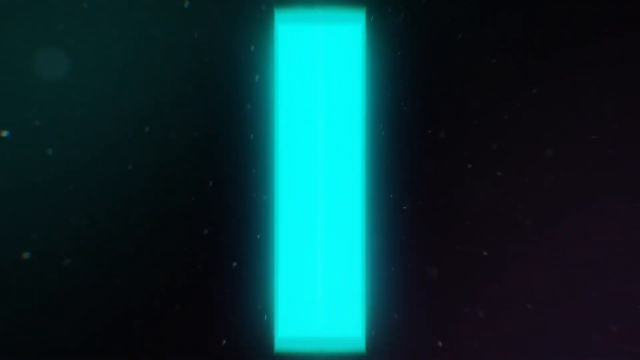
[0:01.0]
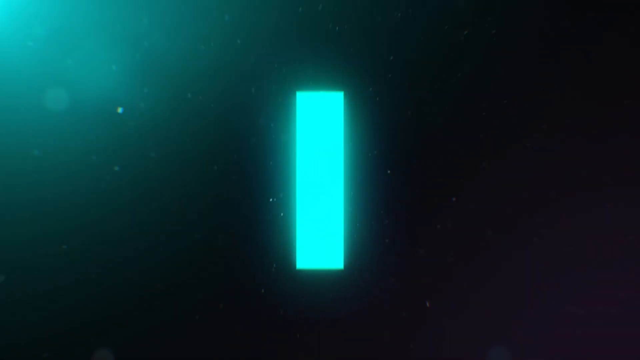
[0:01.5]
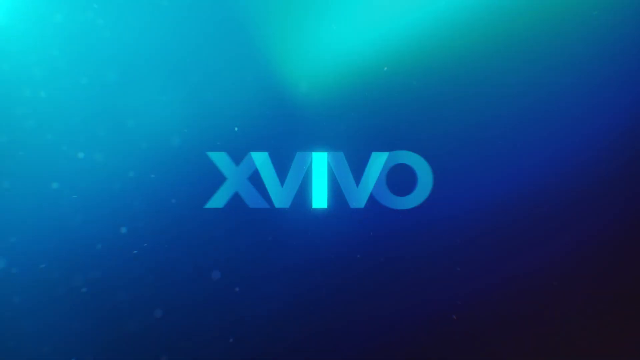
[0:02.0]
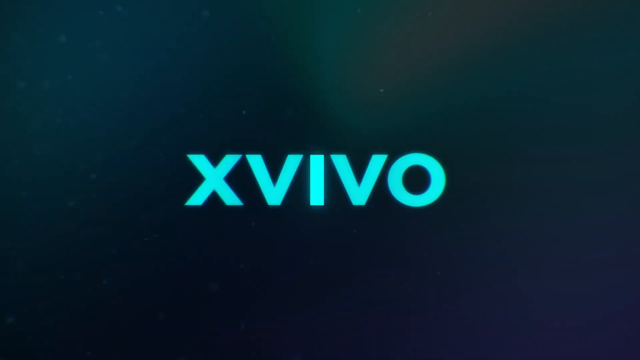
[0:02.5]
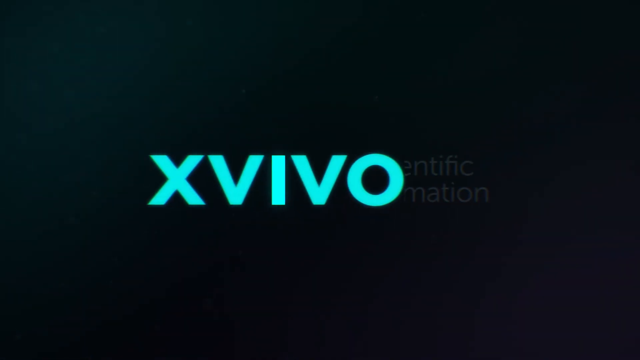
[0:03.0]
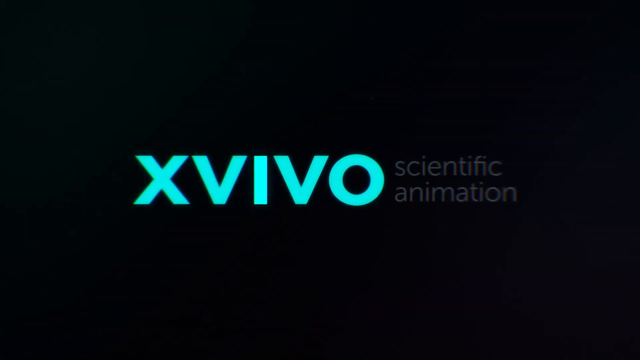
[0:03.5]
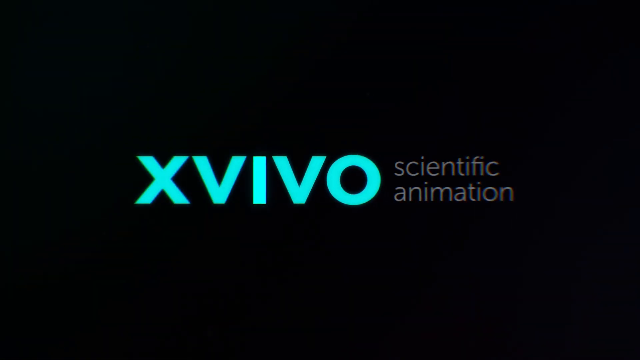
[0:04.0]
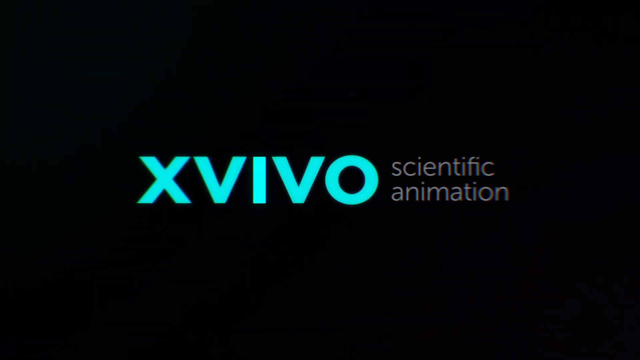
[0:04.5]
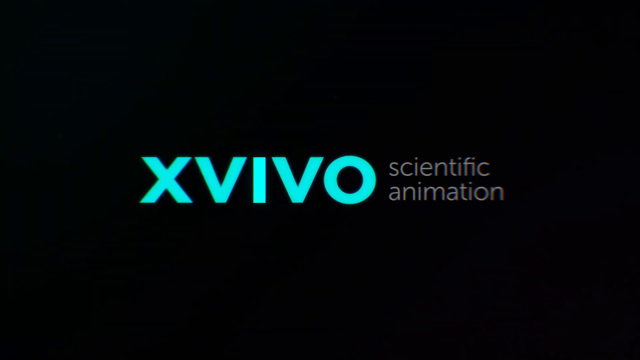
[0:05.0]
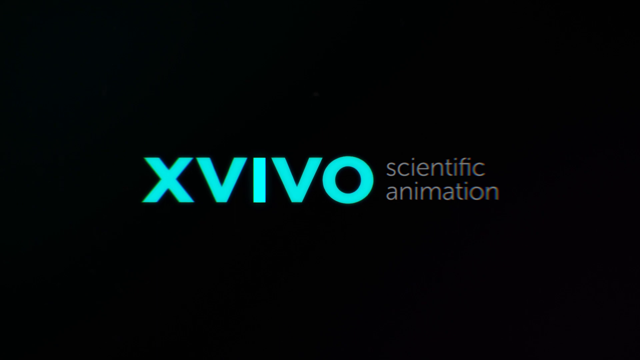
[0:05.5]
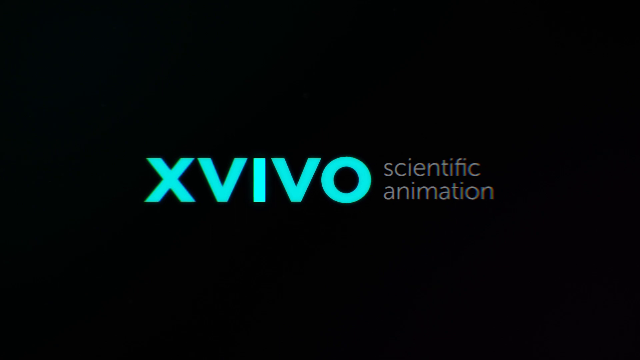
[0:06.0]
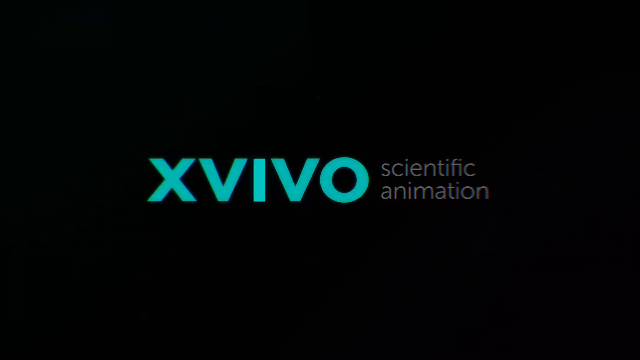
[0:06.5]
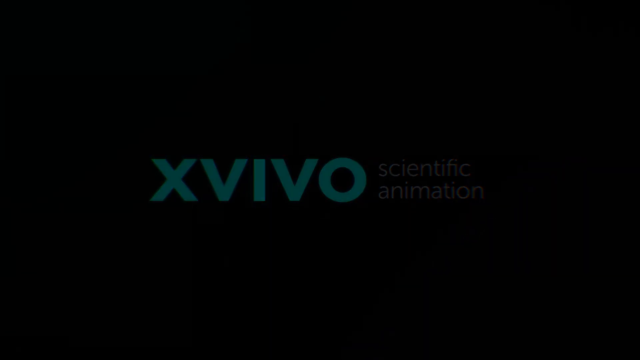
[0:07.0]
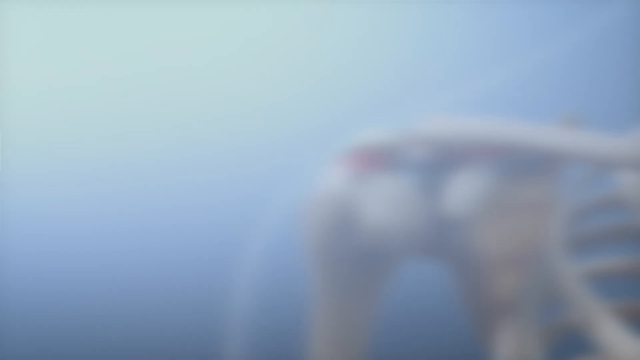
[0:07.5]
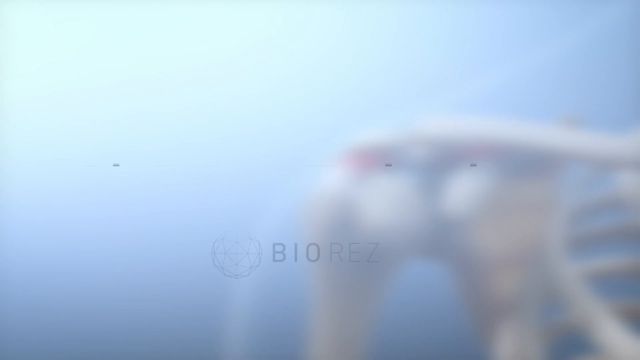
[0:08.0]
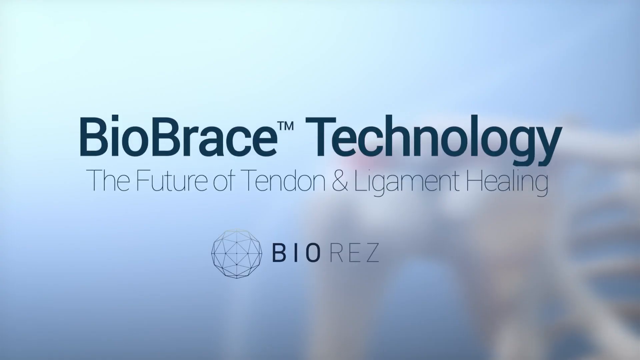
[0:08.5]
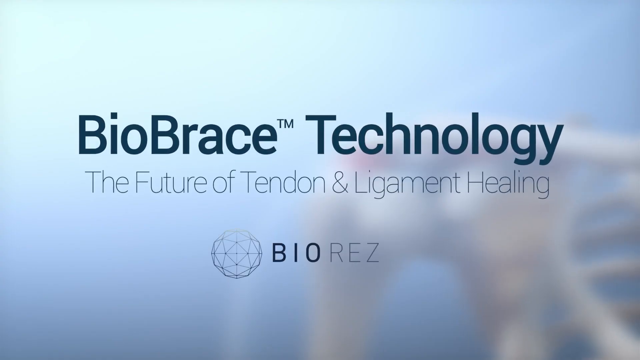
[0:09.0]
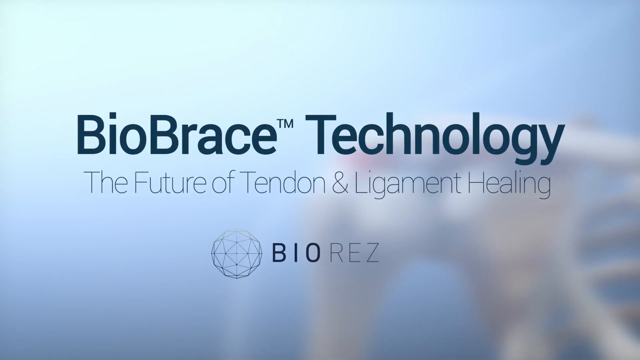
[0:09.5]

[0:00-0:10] A black screen appears, and two green lines come in from the sides to form a single green bar. Then "XVIVO" appears in green capital letters, with the bar now forming the letter I. To the right of it, "scientific animation" appears in lowercase, with "scientific" above "animation" in smaller white letters. Everything is centered both vertically and horizontally on a black background. These words shrink and fade out, and a new screen appears with "Bio Brace Technology" on the top line in bold black letters, and "TM" in smaller letters to the upper right of "Bio Brace". The next line, also in black but in fainter, thinner letters, reads "The Future of Tendon & Ligament Healing". Underneath is a logo that seems to be a polyhedron, with the text "BIOREZ", where "BIO" is bold and "REZ" is in a fainter gray. All the words are centered from left to right, starting about halfway down the screen.